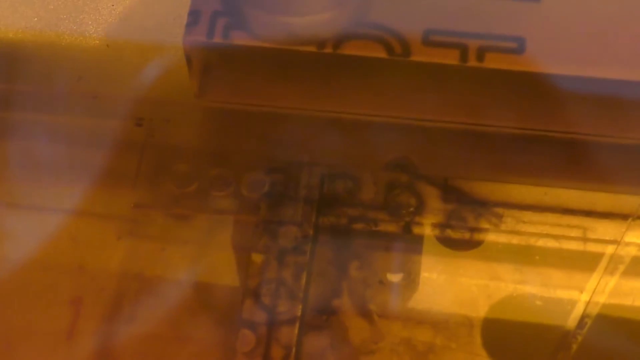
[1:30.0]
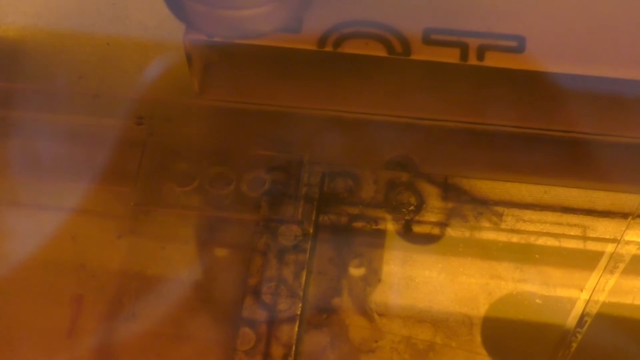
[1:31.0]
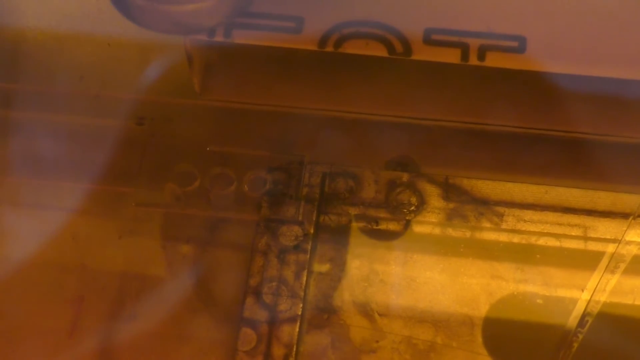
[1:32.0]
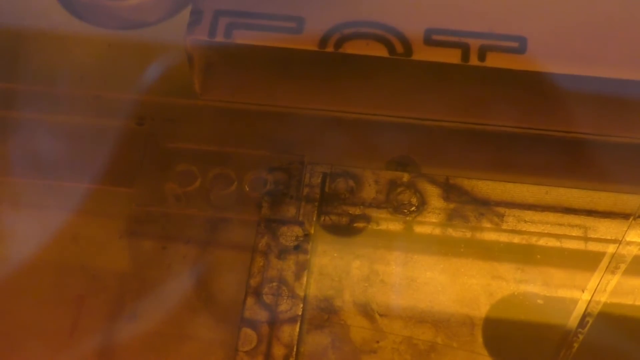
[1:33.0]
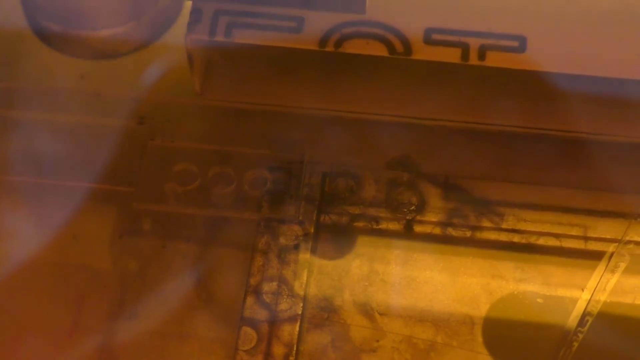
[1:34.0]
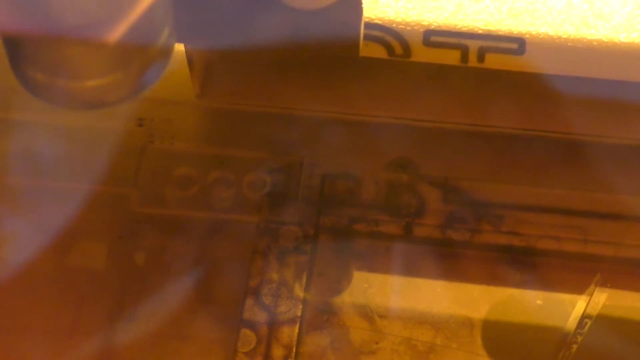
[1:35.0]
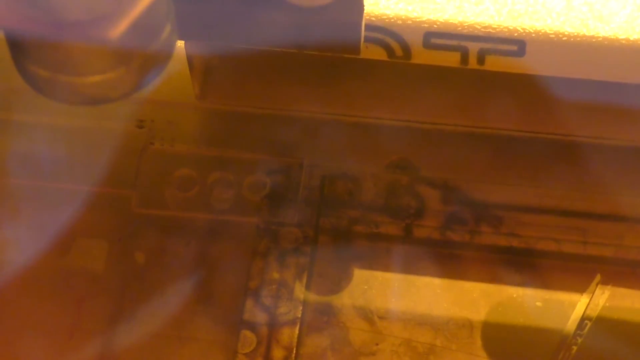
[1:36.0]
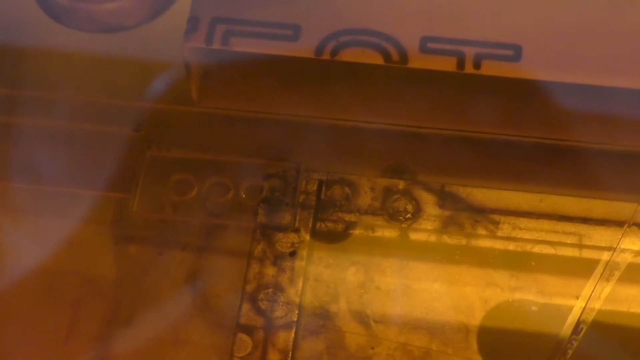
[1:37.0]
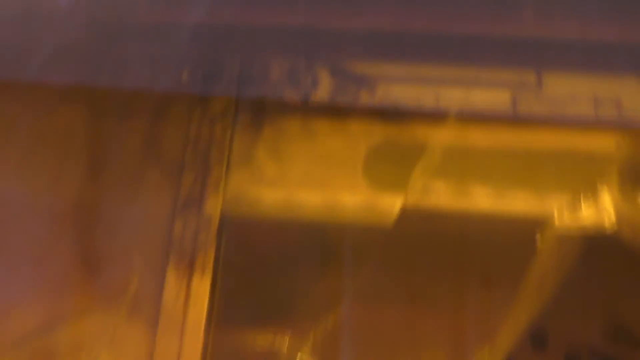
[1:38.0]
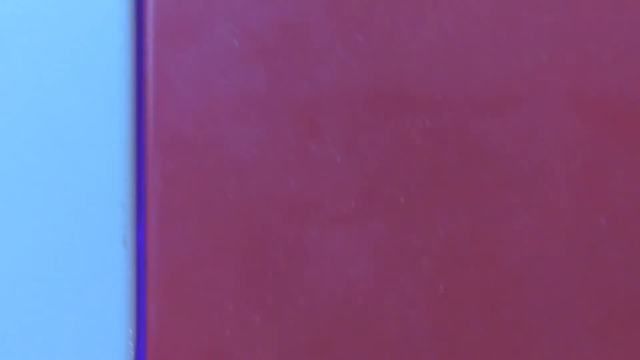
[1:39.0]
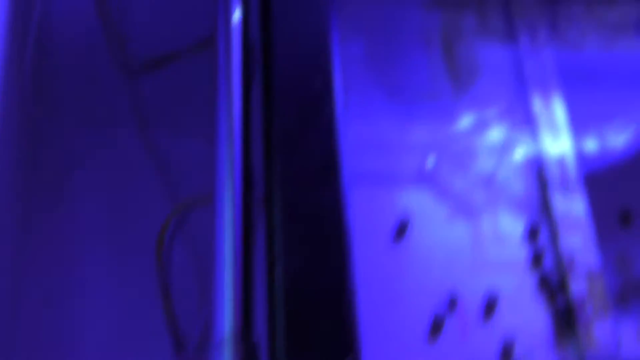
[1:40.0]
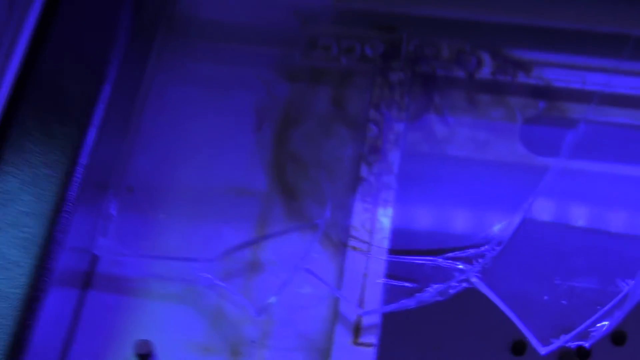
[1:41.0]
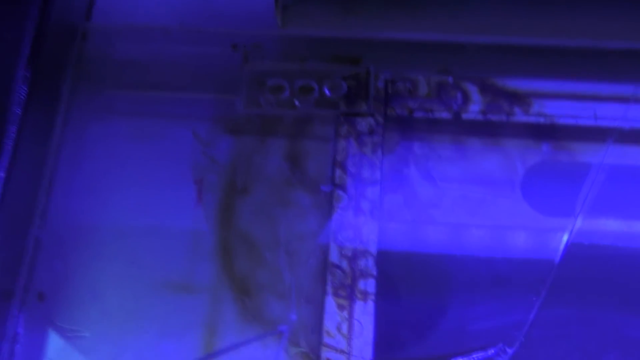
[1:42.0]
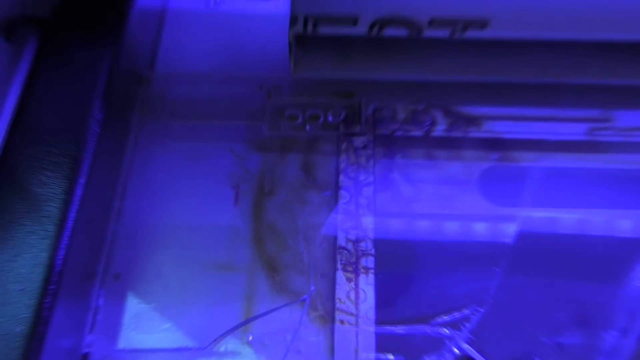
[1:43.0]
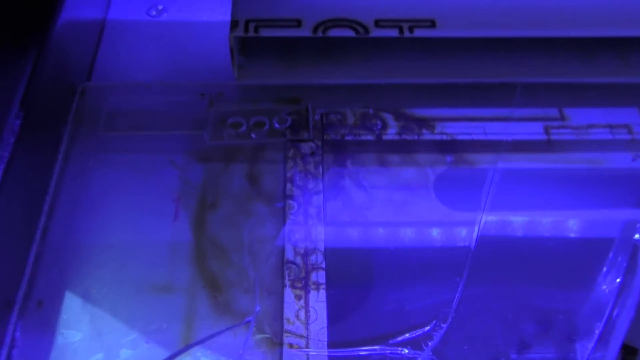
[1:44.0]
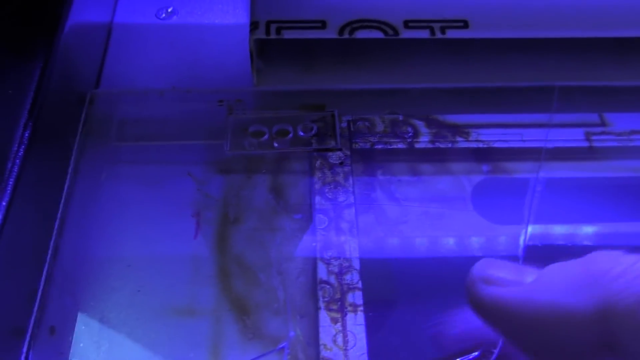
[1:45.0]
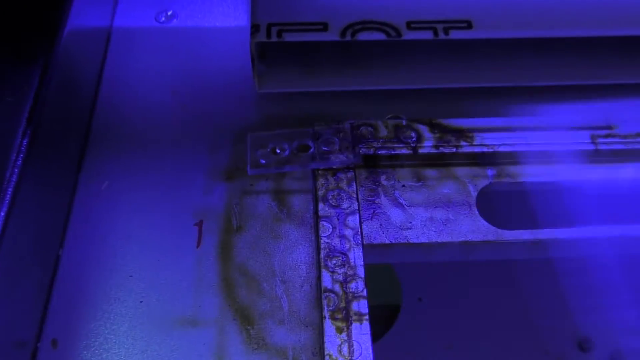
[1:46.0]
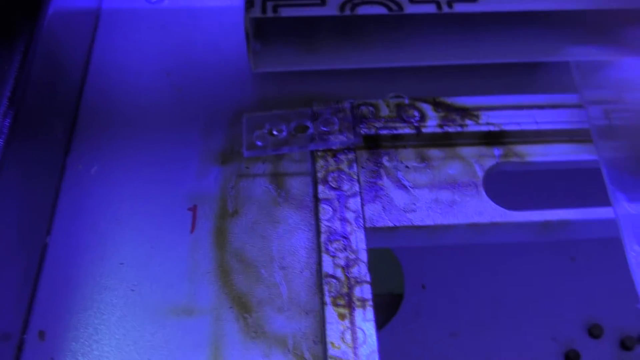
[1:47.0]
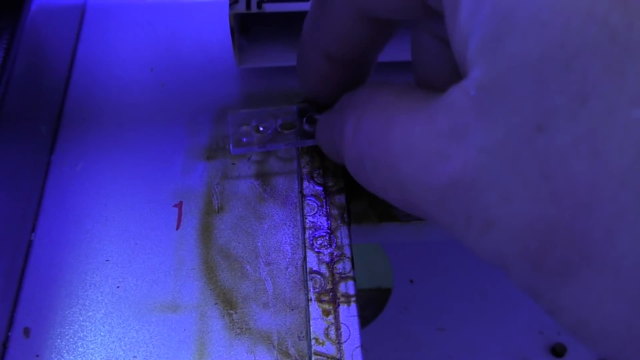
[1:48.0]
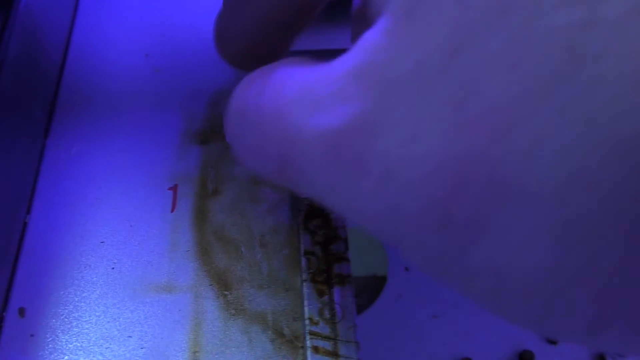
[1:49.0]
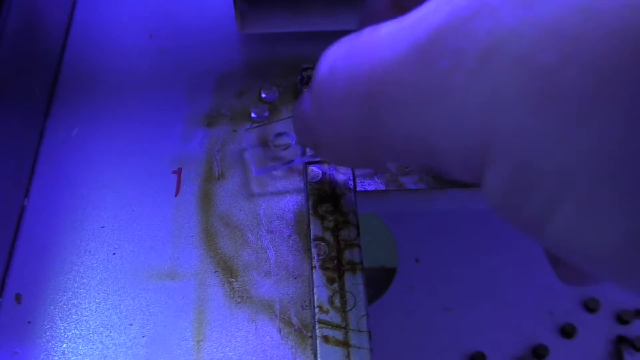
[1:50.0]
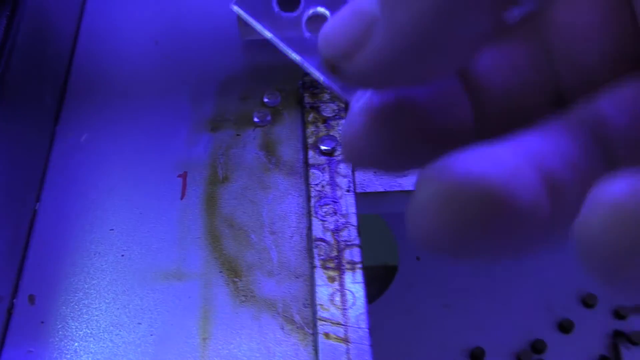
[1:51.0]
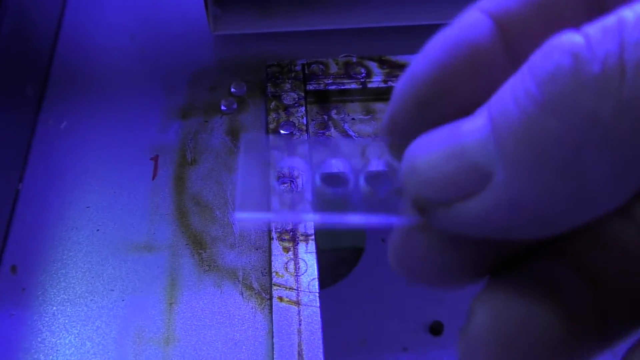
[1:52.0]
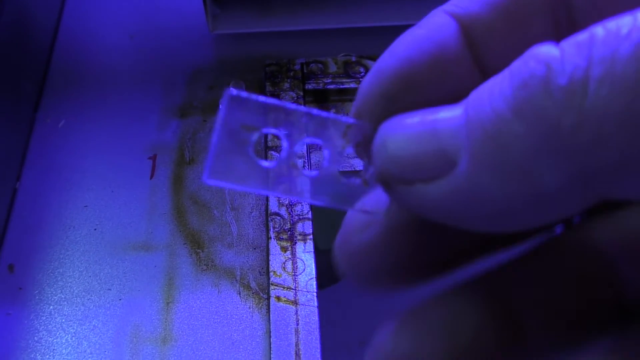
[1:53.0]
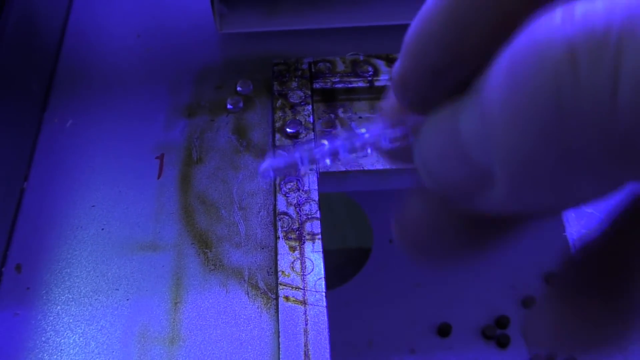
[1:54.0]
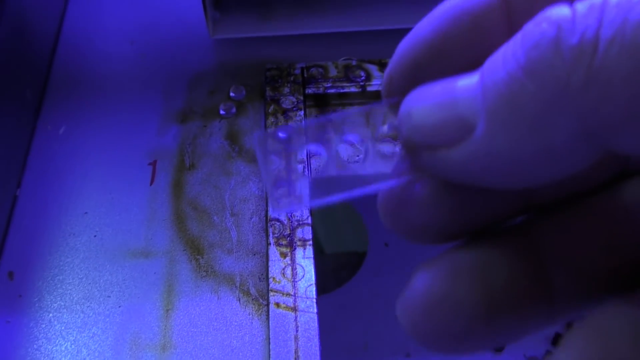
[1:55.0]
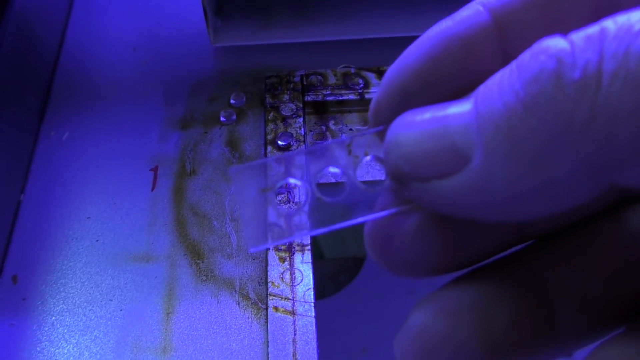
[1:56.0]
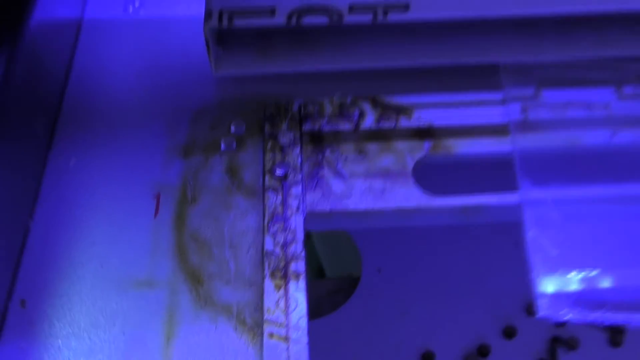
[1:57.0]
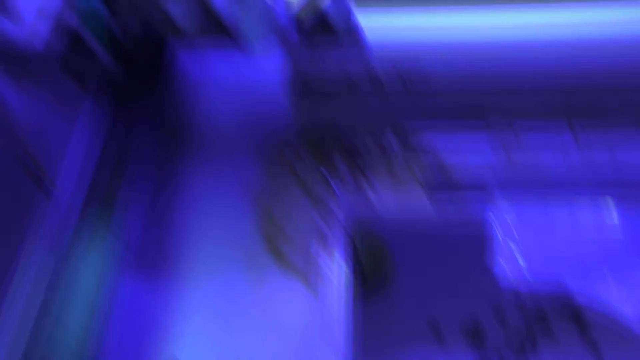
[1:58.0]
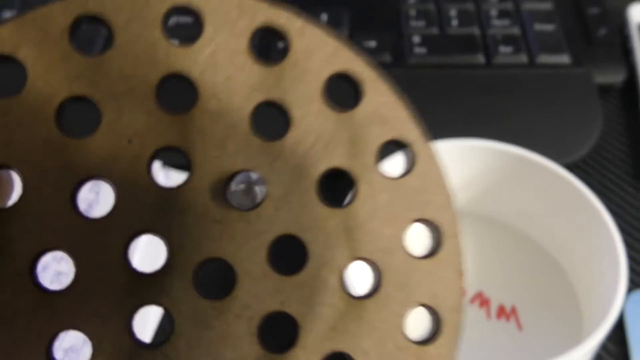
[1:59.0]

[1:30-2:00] Small circles are engraved on a little rectangular block of glass. The user opens the laser machine or engraver, and their fingers touch the small sample or chip, which has three small circles on it; this tiny block looks like what was used to create the uniform small circles. The user removes it, then takes out the board etched with the small circles close together and outlined by a big round circle on the outer border; it looks like a template. At the end, the big circle with the small circles is shown in the background on the screen.